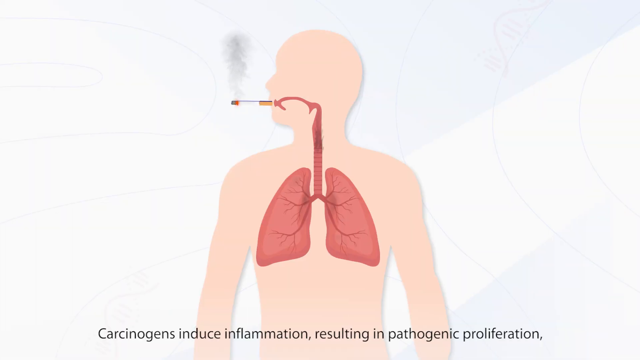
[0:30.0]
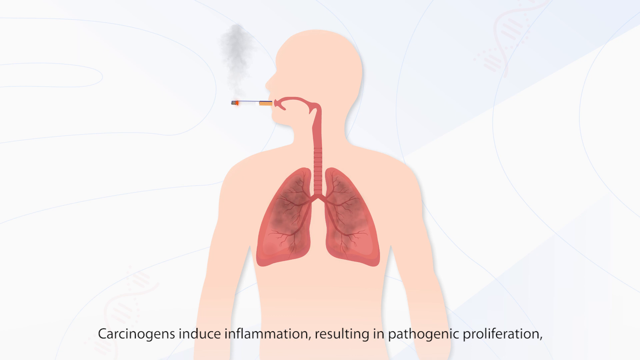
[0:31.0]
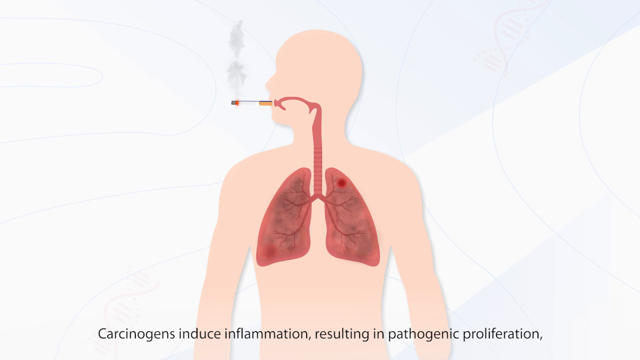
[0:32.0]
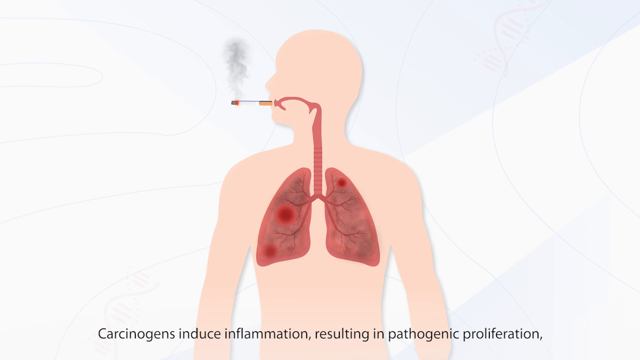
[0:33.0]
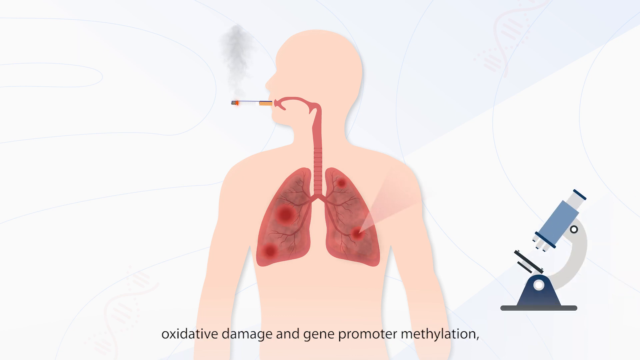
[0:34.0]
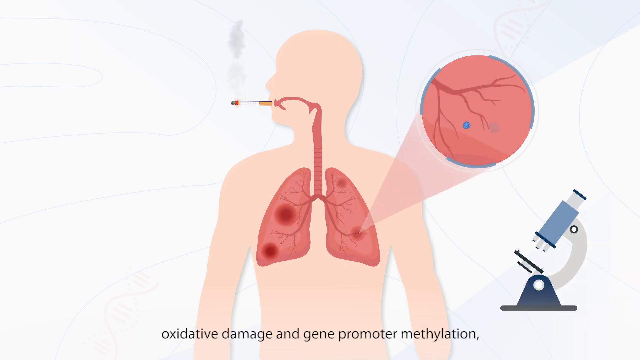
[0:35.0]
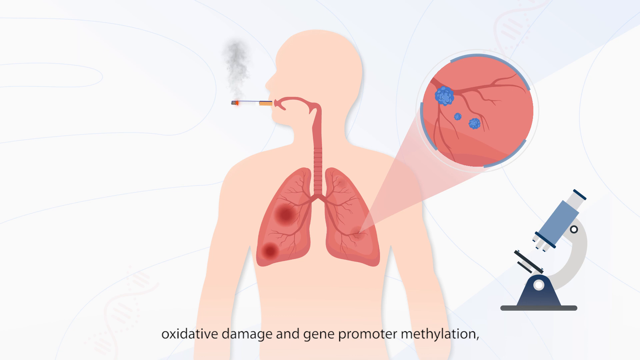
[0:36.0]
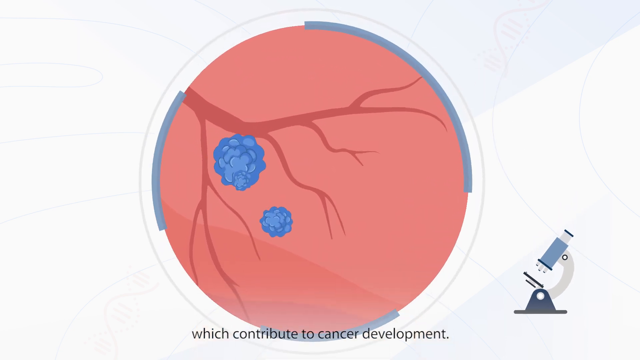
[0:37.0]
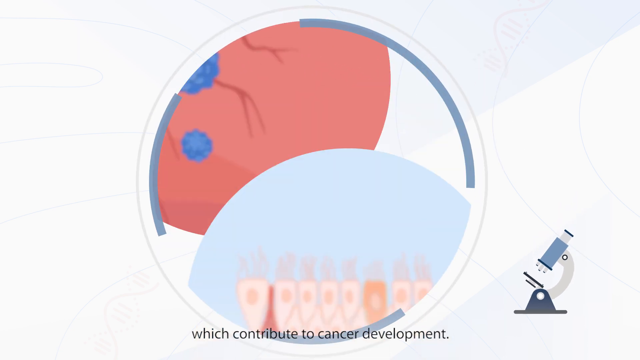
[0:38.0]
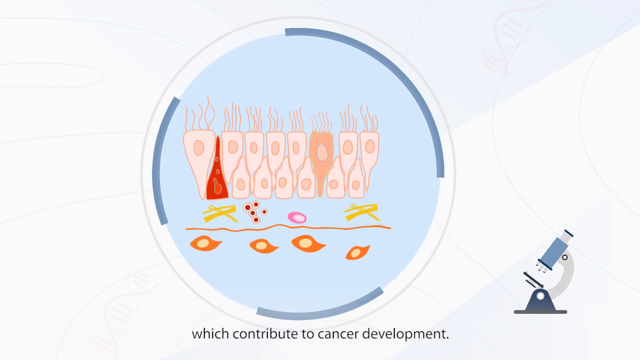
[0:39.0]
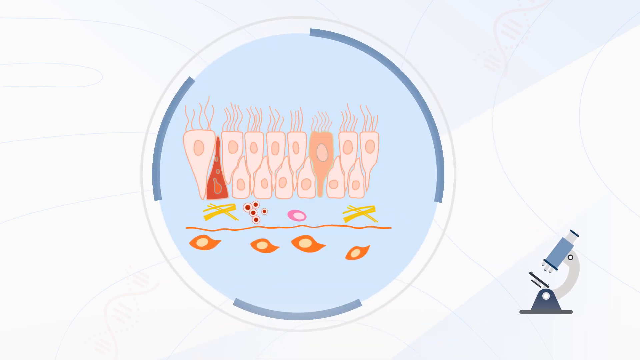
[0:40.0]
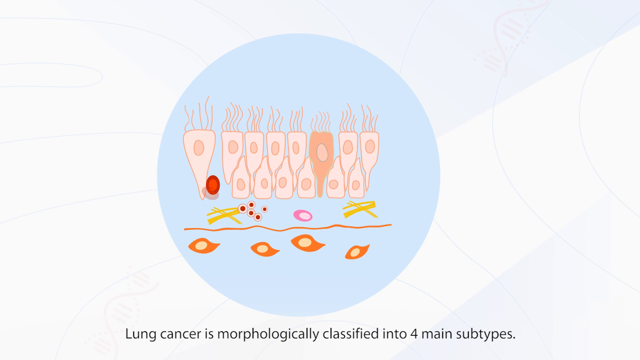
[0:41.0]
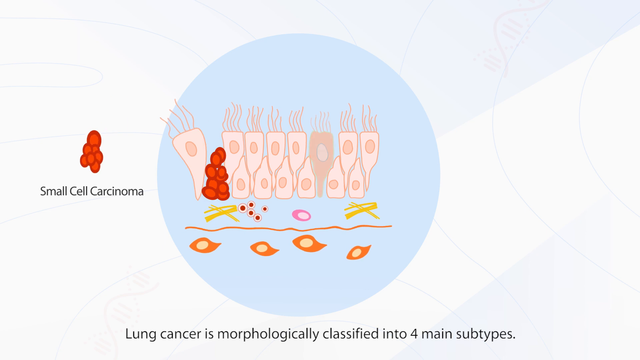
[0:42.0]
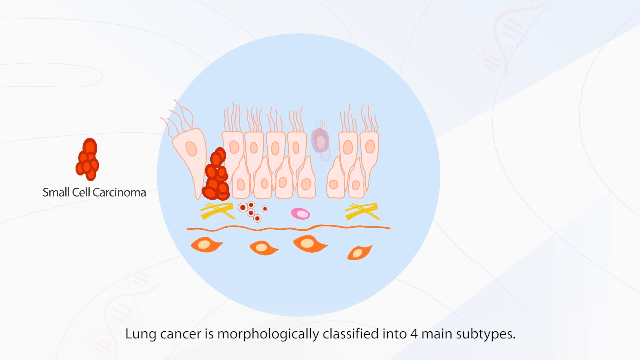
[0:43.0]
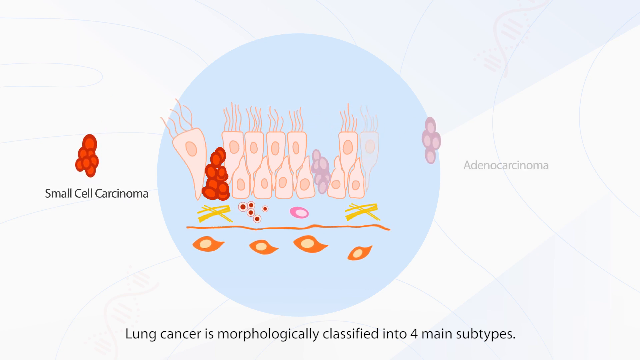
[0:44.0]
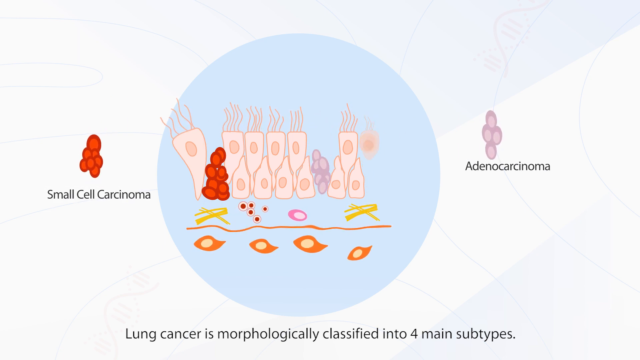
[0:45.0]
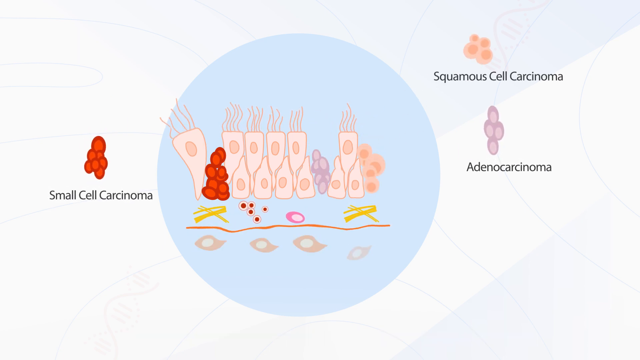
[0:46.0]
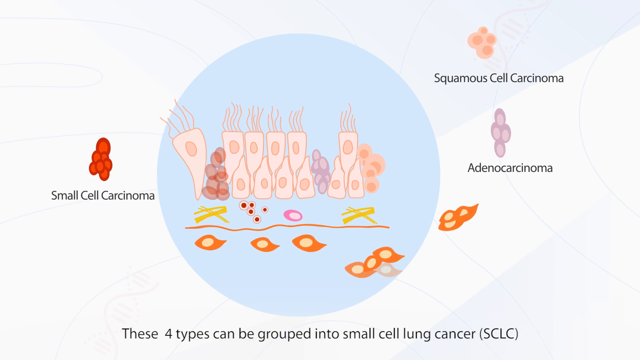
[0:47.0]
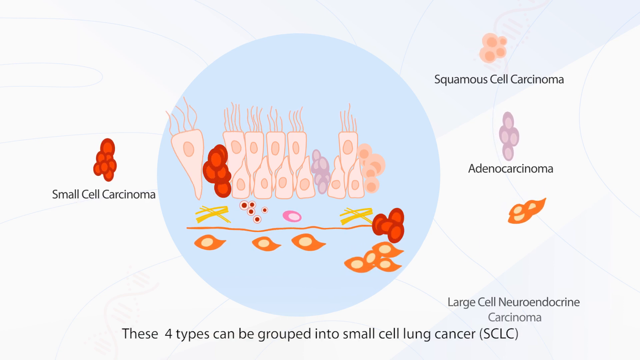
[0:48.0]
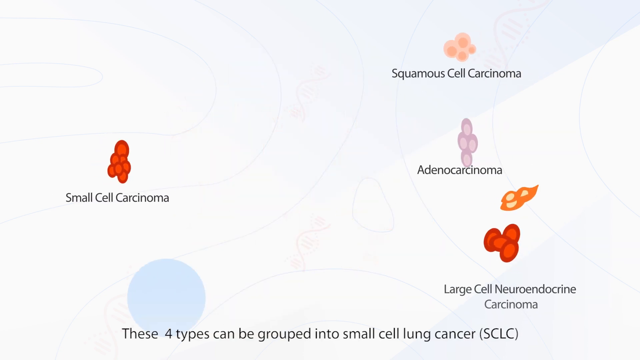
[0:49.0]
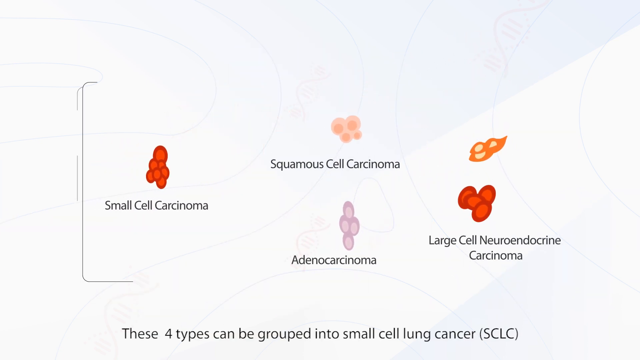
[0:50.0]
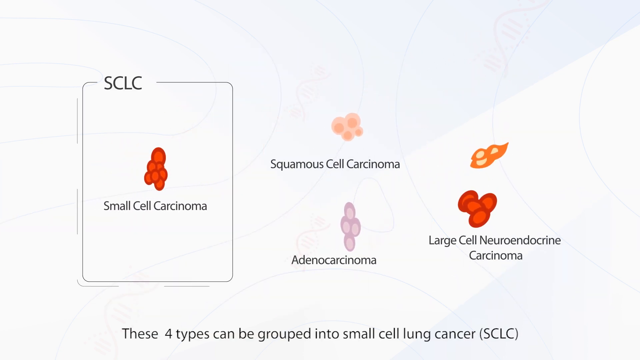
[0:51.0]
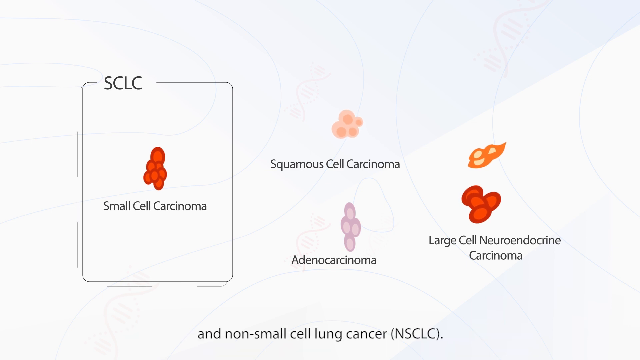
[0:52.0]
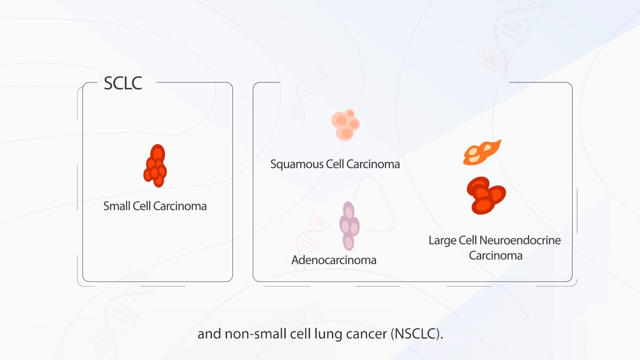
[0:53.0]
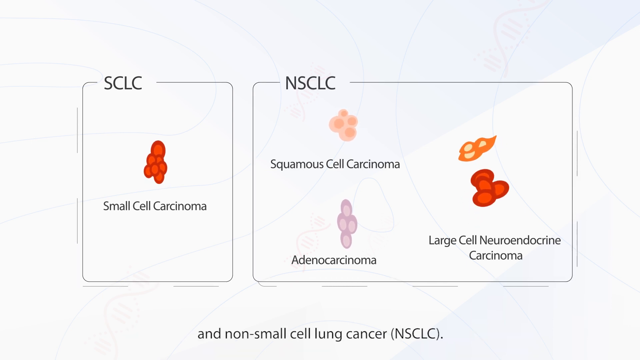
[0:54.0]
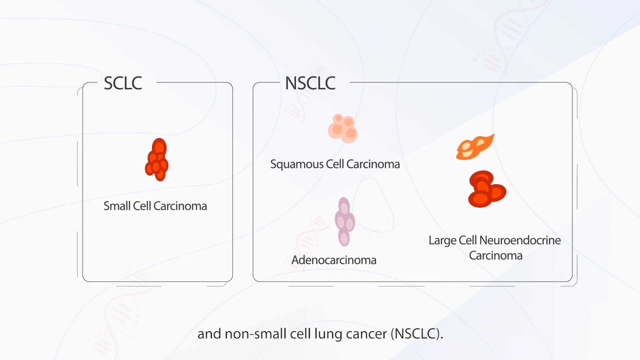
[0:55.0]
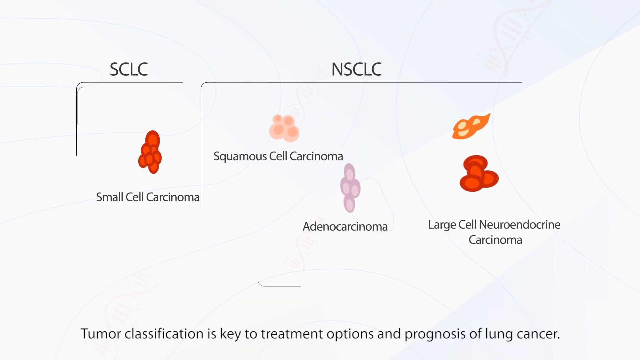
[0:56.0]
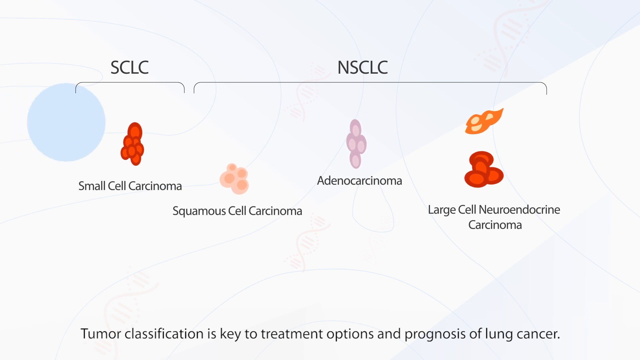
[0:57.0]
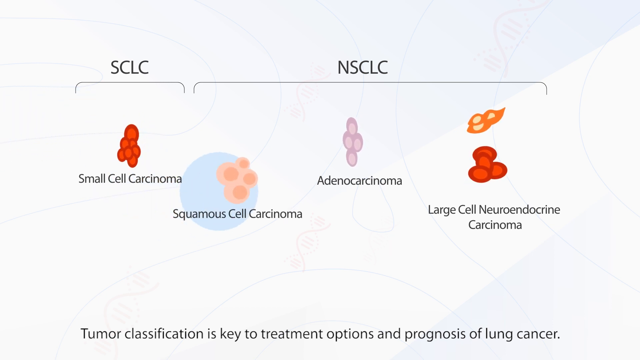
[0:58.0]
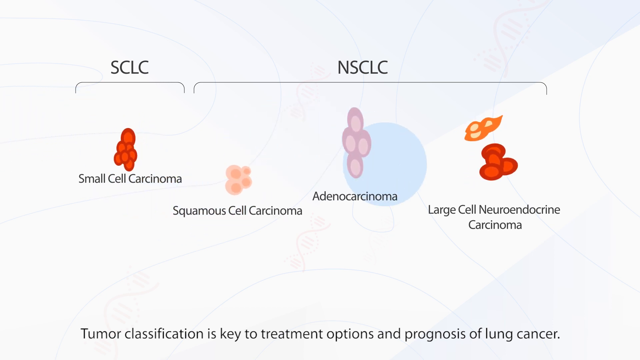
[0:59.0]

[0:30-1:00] A scientific image of a man appears, almost a shadow, a silhouette seen from the side, his head facing left. His lungs are clearly detailed and he has a cigarette in his mouth, its flame pointing to the left side of the screen, with a billow of smoke going up towards the top of the screen. As he smokes, the lungs turn black, starting from the tips of the blood vessels and slowly spreading until the lungs are fully black. Red spots appear: two large ones in the left lung and two smaller ones in the right lung. A very small microscope slides in at the bottom right corner. A bubble appears from the lung magnifying an image of blue carcinoma cells beginning to stick to the vessels. The magnified scene zooms into the centre of focus, removing everything else from view, and the carcinoma cells bounce around the lung. The image slides, almost like a slideshow, to a focused image of the cells. Some cells are damaged and begin to turn into a bright red small cell carcinoma, which then splits off and flows freely. To its right, a cell changes differently, becoming pink and turning into an adenocarcinoma. The furthest right cell changes another way, turning light pink and becoming a squamous cell carcinoma. Images of endocrine cells underneath the lung epithelial cells change into neuroendocrine carcinomas. Each of these has branched off from the main image in the centre, which becomes a small bubble and bounces off to the left side of the screen until it is gone. The cancerous cells line up into clusters; the small cell carcinoma moves to the far left while the other cells still float about the screen.